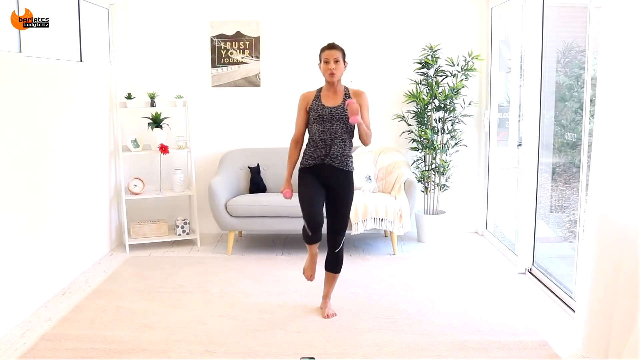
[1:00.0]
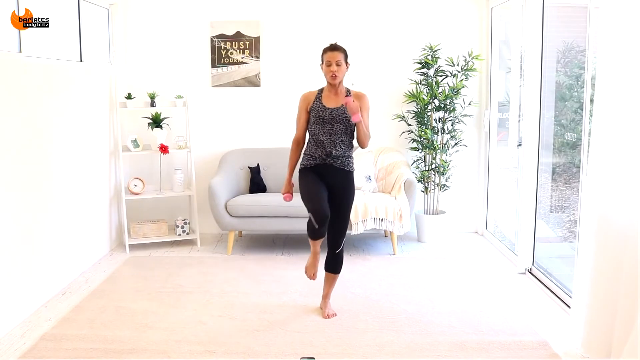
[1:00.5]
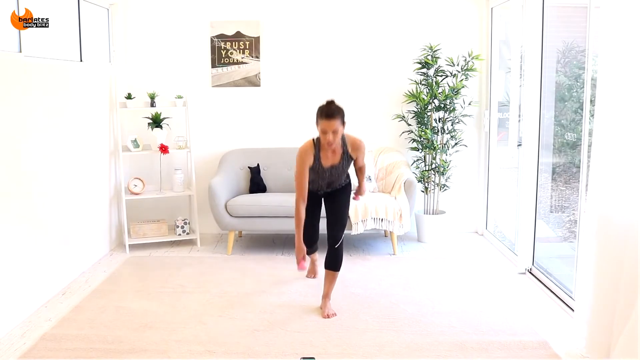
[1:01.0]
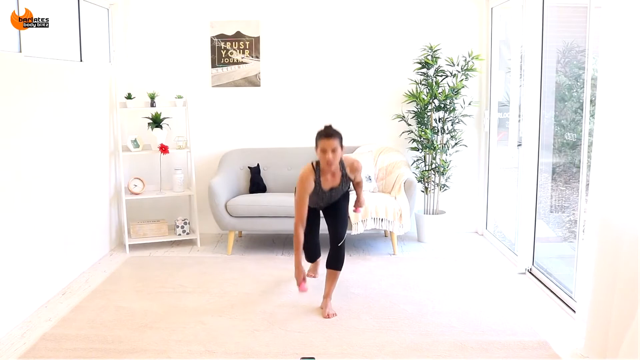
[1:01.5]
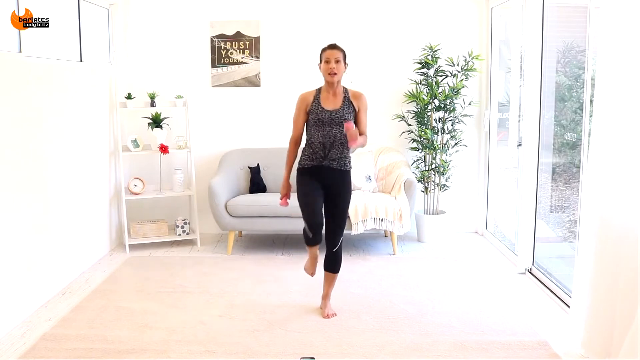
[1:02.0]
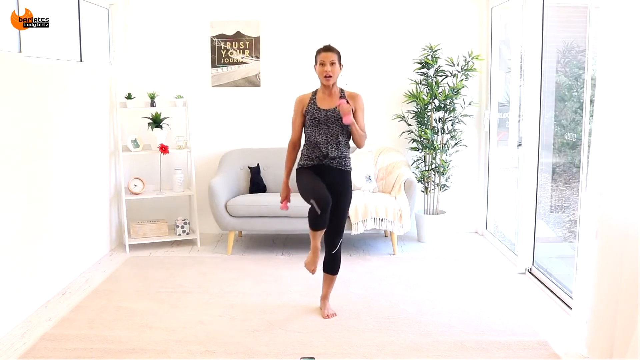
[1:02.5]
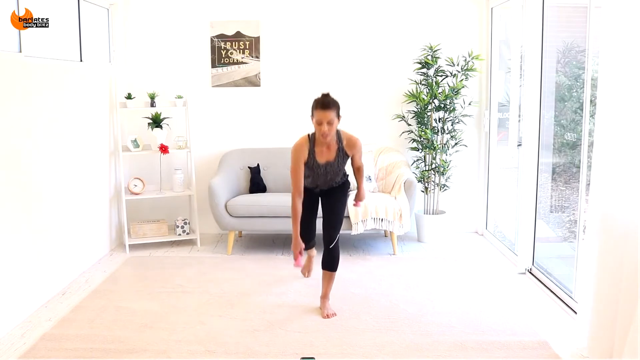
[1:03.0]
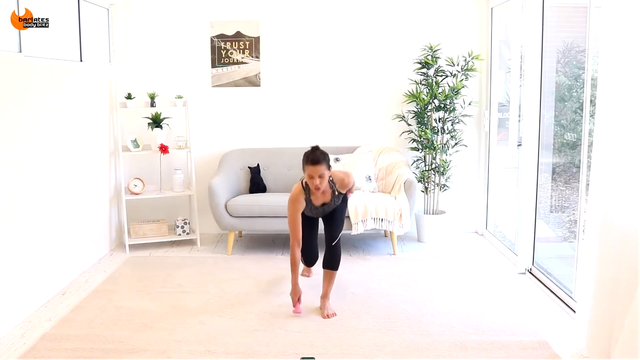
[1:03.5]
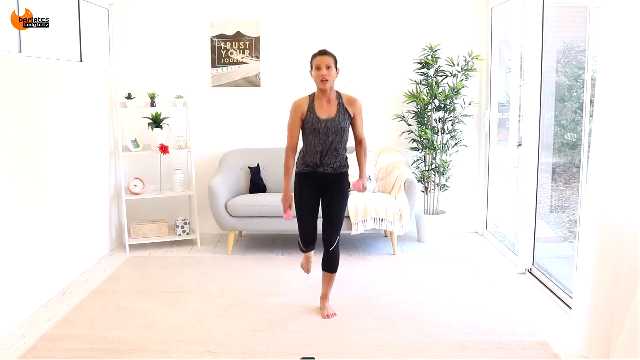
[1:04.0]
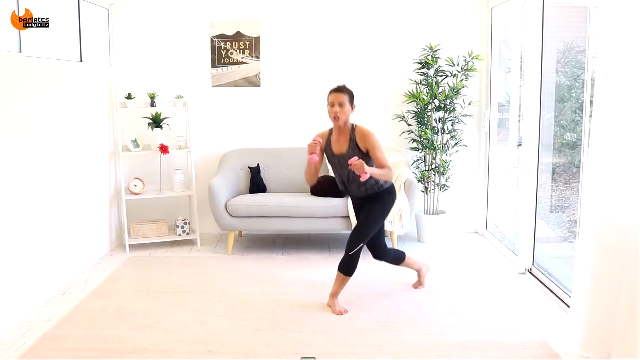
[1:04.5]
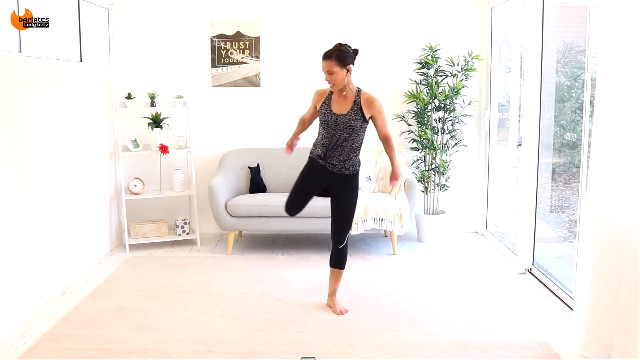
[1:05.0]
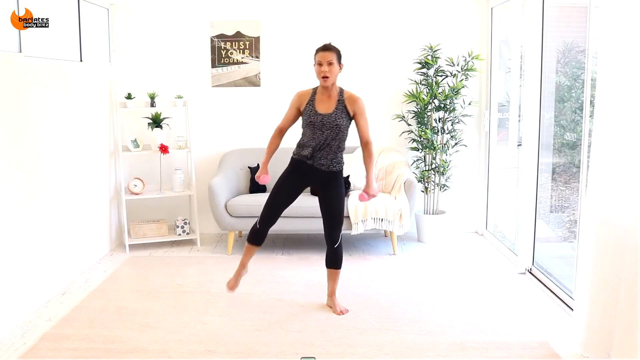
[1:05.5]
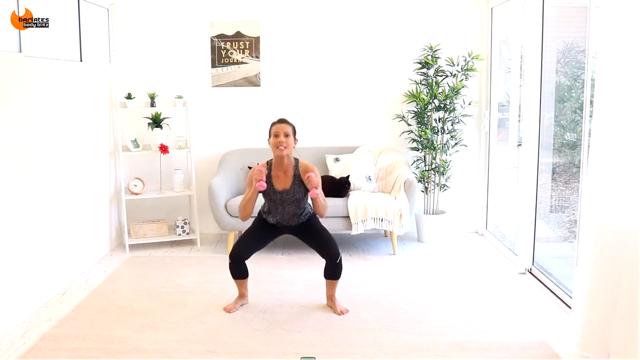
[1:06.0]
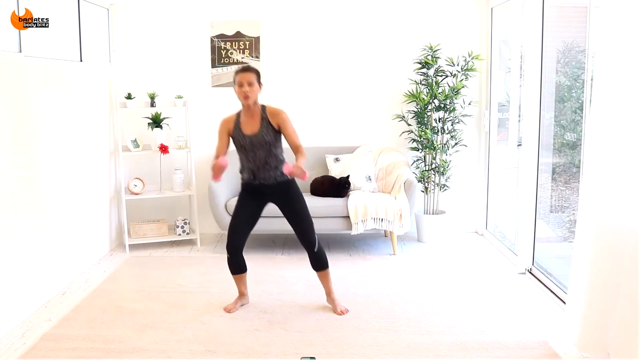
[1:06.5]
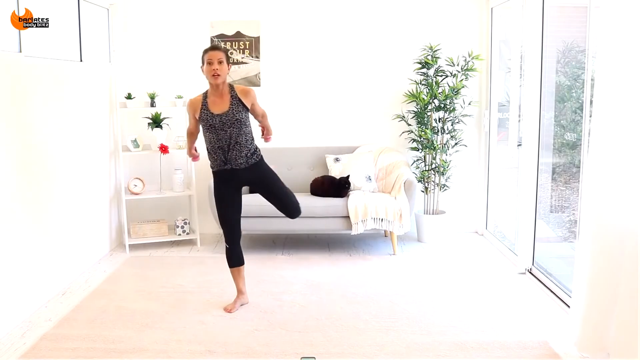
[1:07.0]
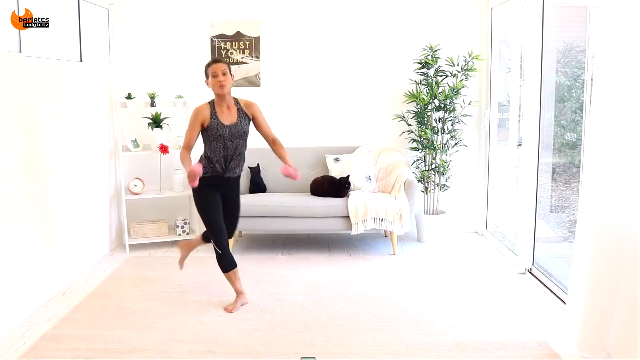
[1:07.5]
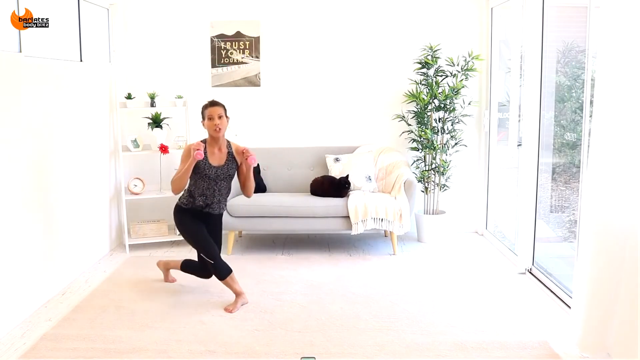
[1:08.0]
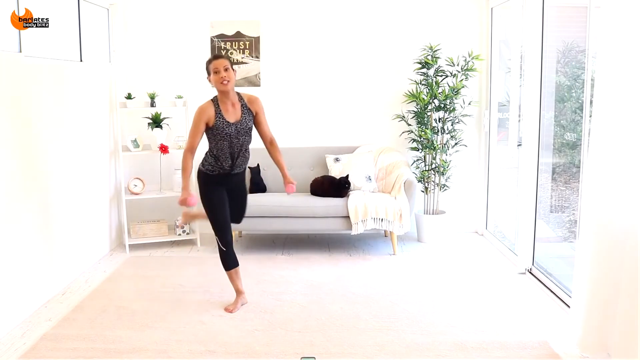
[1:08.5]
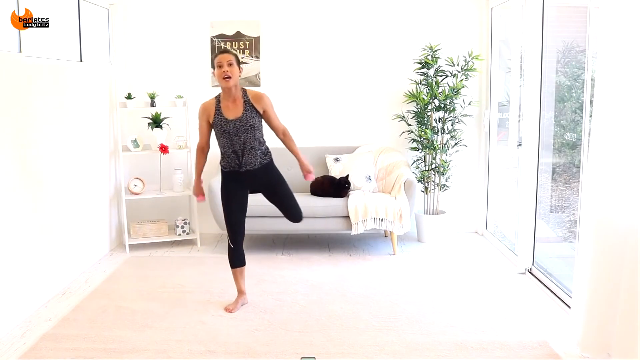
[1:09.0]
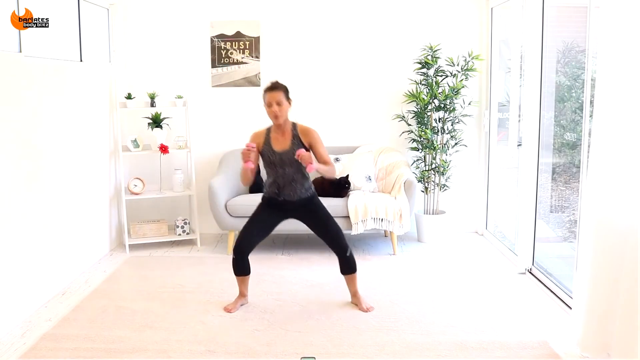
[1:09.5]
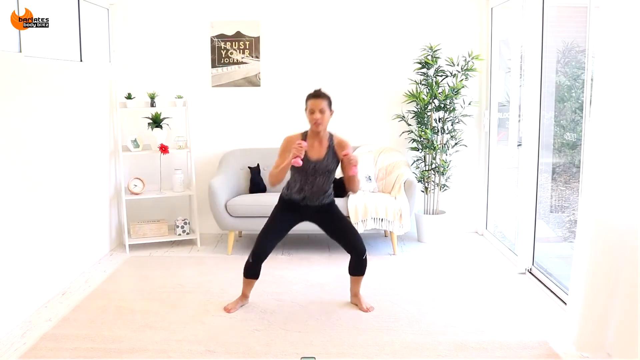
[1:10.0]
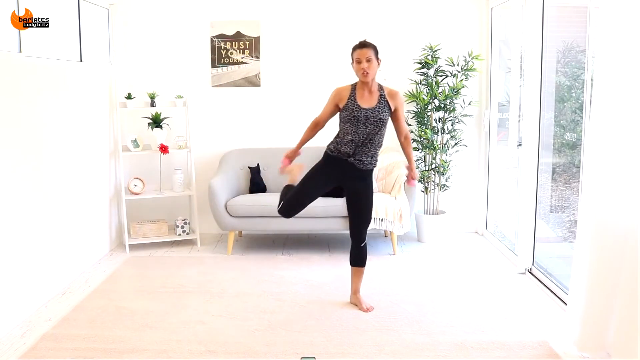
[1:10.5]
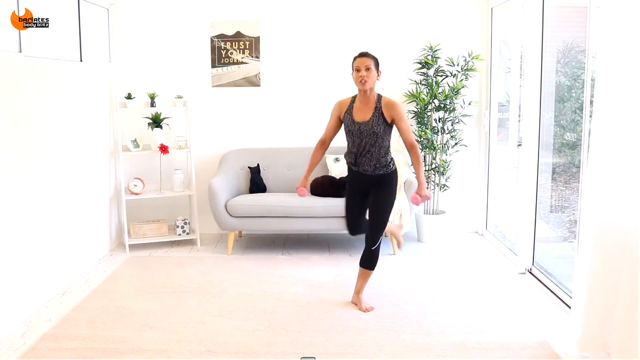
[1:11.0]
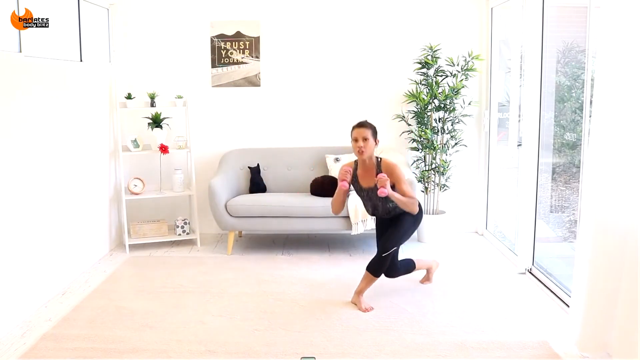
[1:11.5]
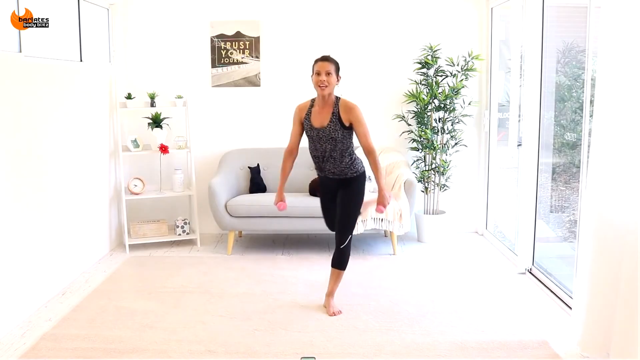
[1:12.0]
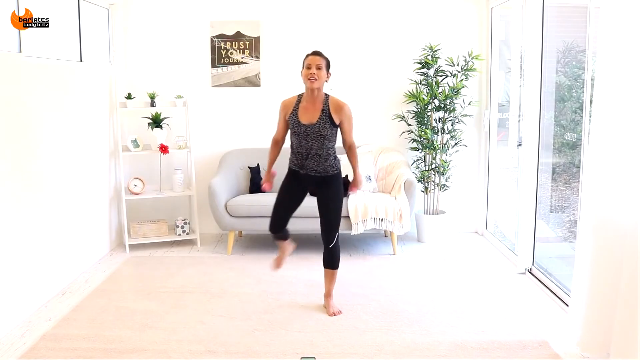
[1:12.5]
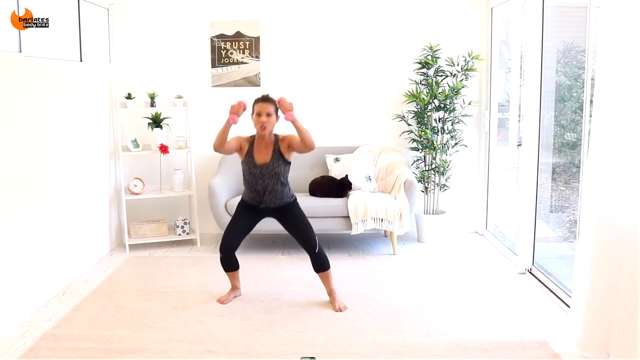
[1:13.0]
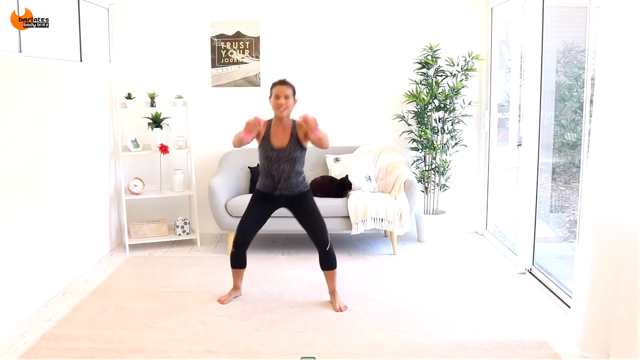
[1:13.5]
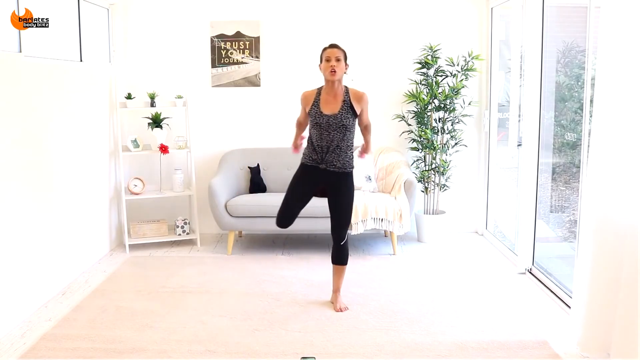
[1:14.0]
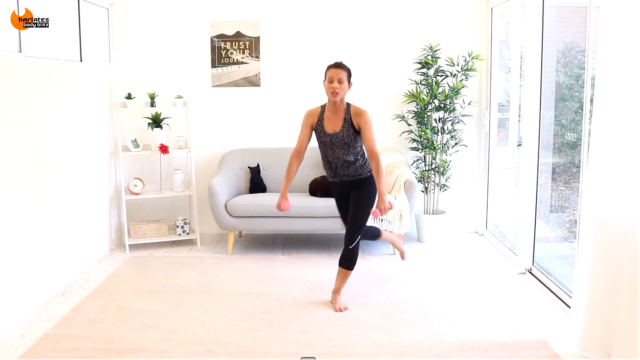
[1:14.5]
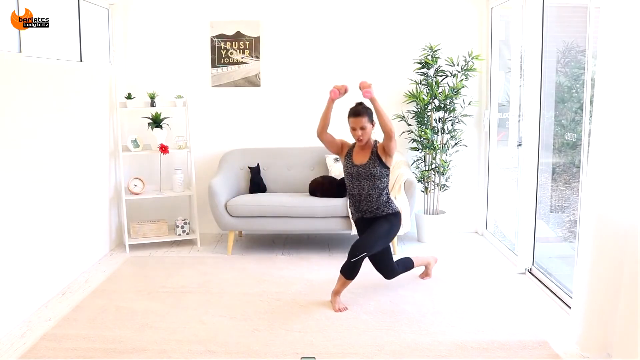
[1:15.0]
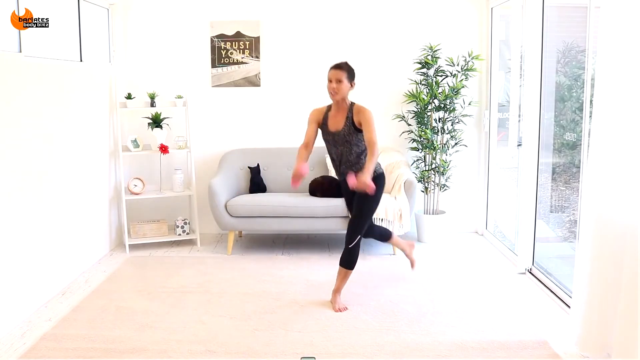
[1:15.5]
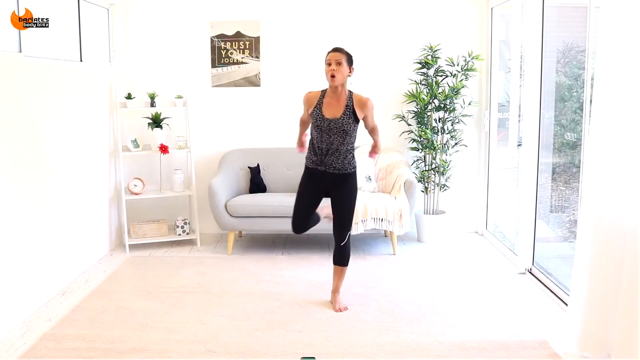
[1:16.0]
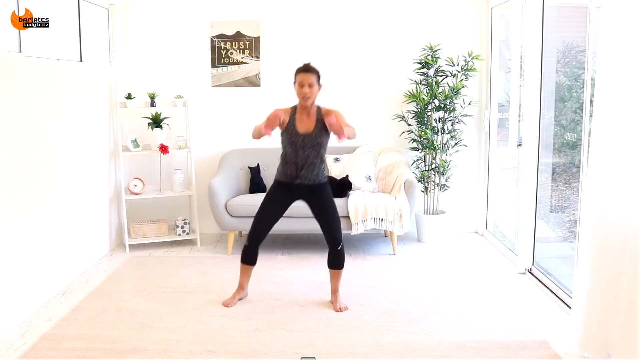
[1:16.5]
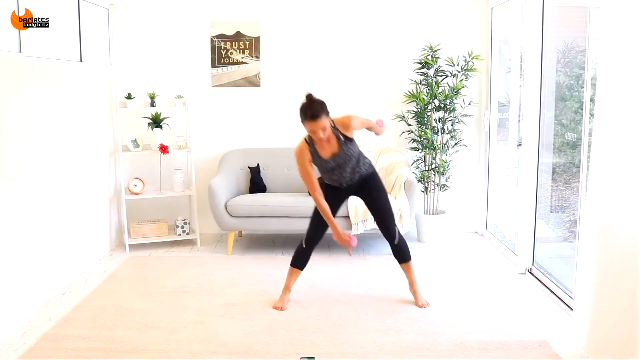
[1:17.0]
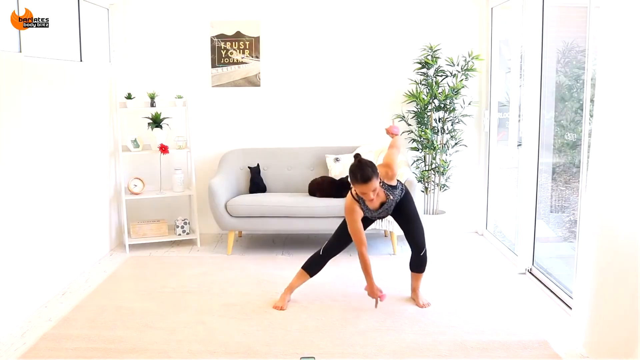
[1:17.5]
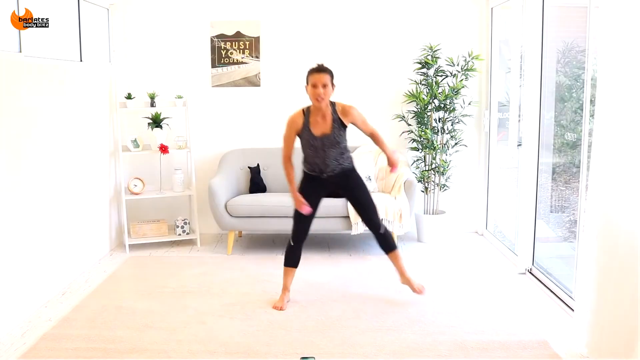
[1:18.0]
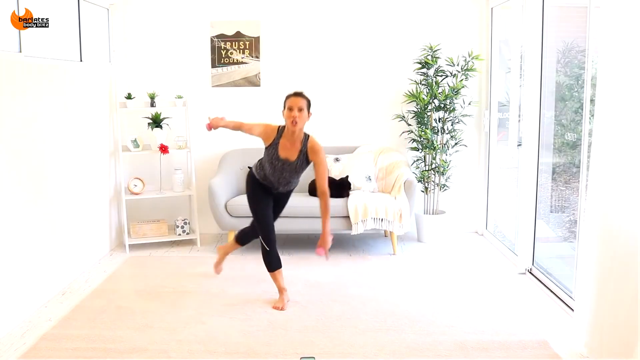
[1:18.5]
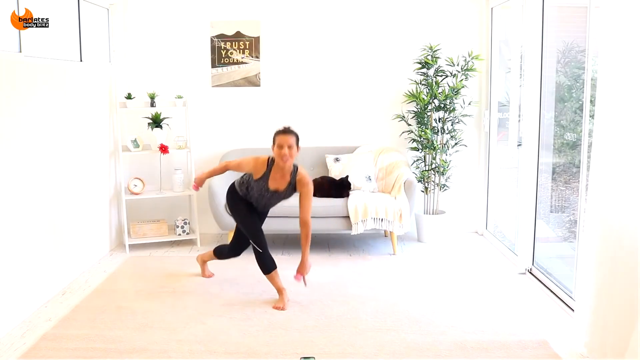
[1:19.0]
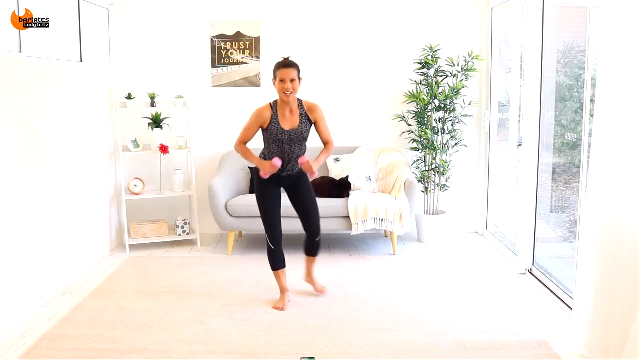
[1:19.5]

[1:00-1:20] The woman in the center of the room, who appears to be teaching an exercise class, continues with various lunges. She does about three lunges in which she steps back and, before bringing her feet together, brings her knee forward and then steps back into the lunge. She then keeps the same step-back and knee-lift form, but when her foot returns to the ground and she steps back into the lunge, she also brings one hand down to touch the ground. Next she does what looks at first like a squat, then lunges to the side and does a curtsy-type lunge, bringing one leg behind the other without pausing in between; bringing her foot back, she goes into a squat and moves to the other side. She finishes doing the curtsy-type lunge a little quicker, touching the ground as she bends her knees into the lunge, coming back to the middle and starting the next one without stopping between motions.